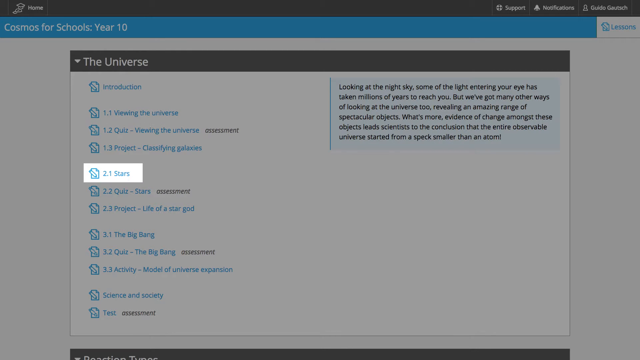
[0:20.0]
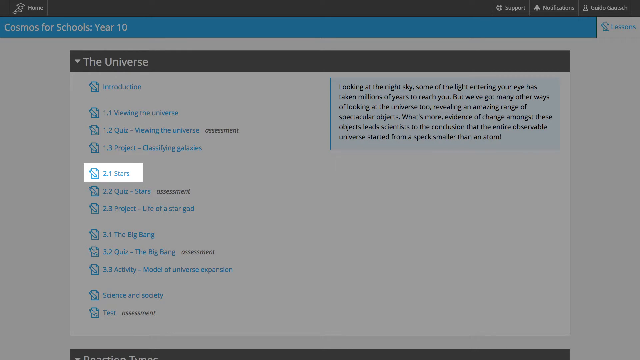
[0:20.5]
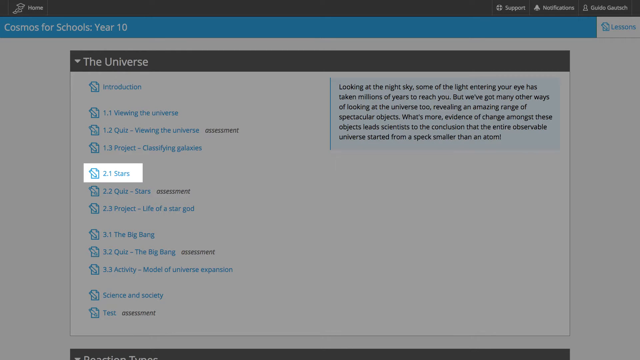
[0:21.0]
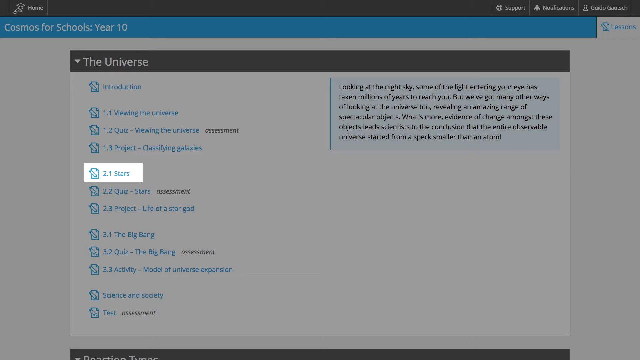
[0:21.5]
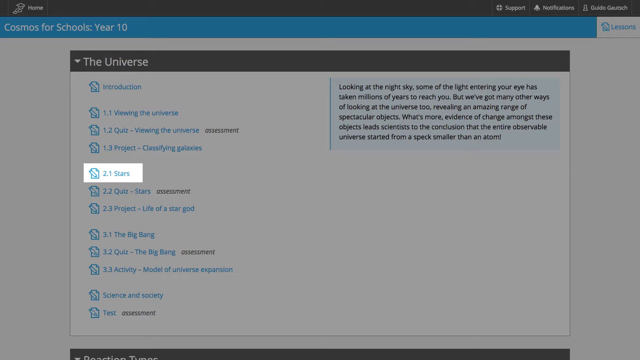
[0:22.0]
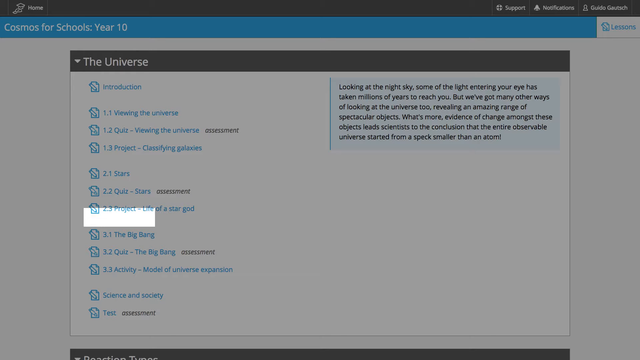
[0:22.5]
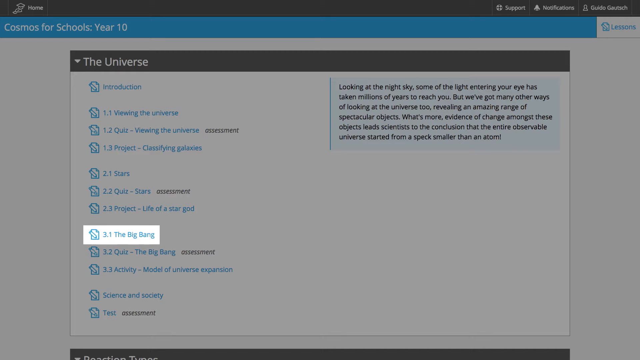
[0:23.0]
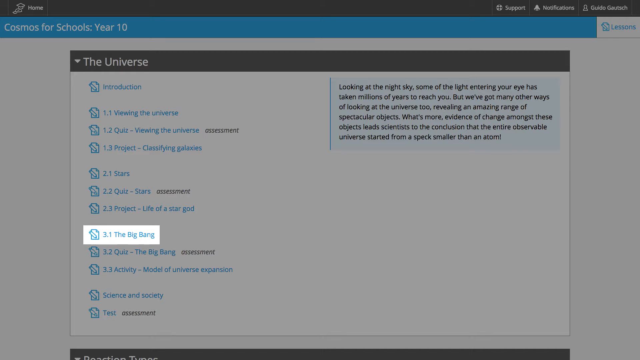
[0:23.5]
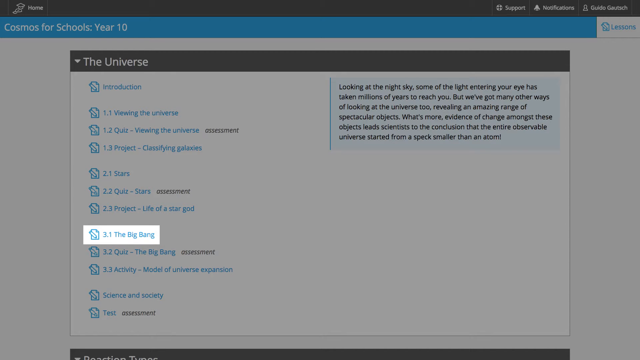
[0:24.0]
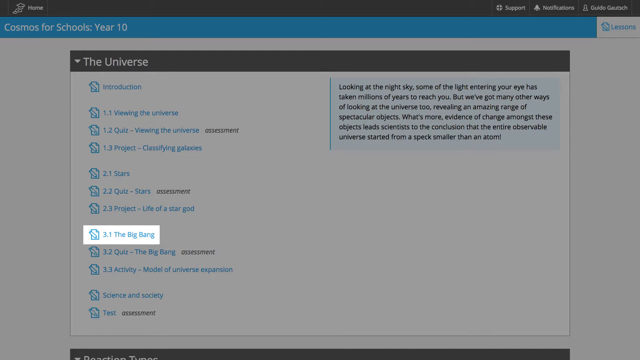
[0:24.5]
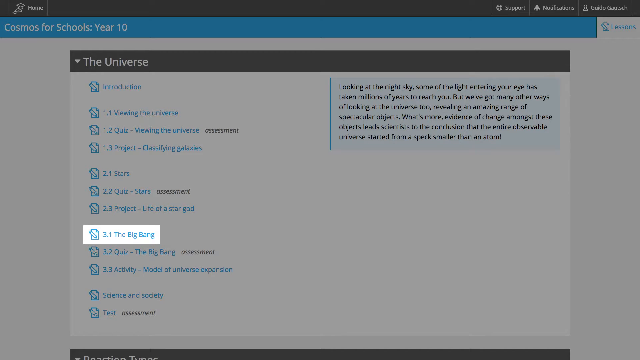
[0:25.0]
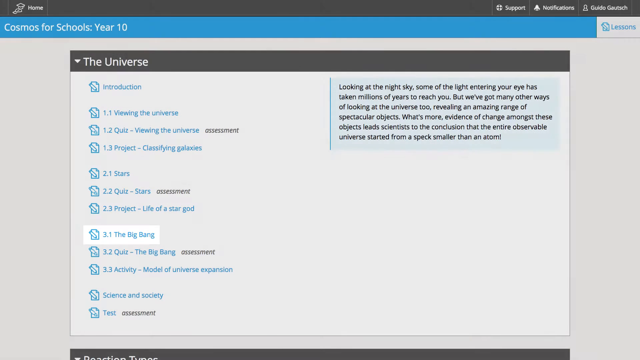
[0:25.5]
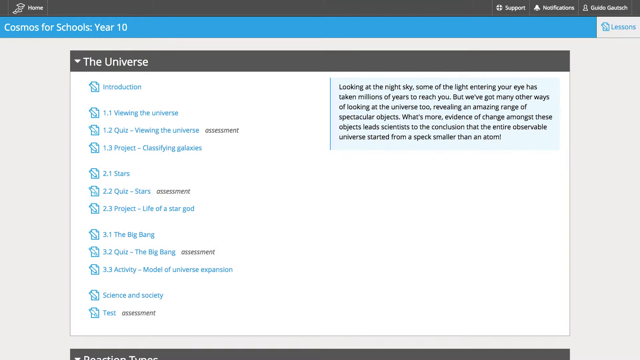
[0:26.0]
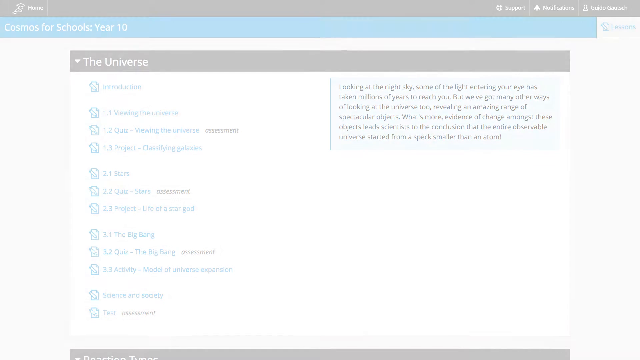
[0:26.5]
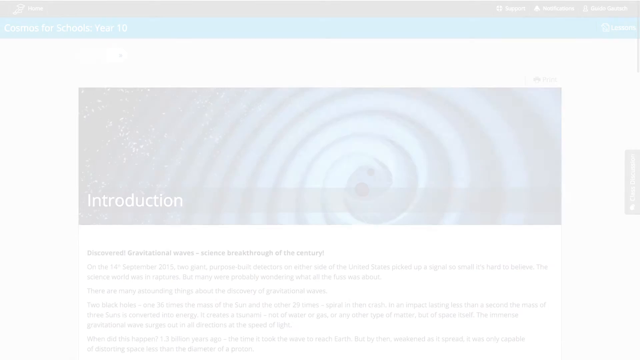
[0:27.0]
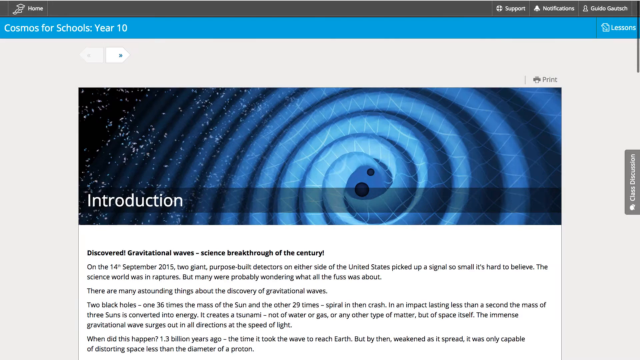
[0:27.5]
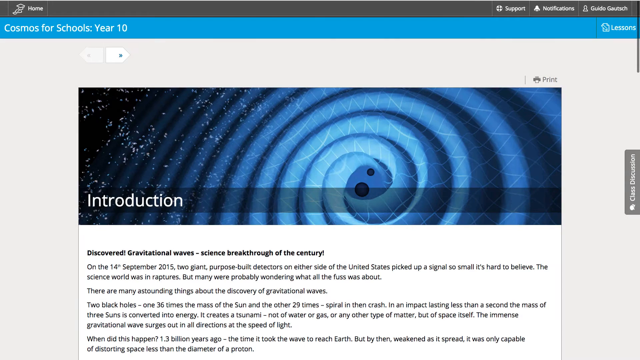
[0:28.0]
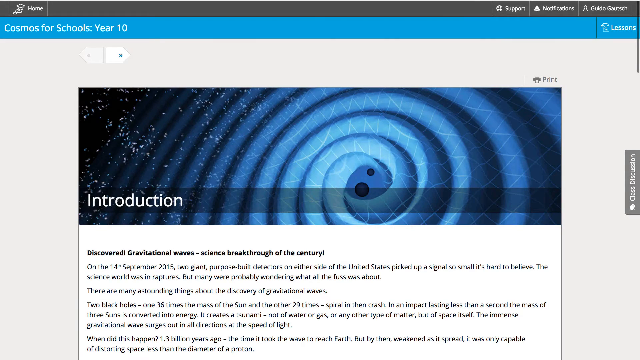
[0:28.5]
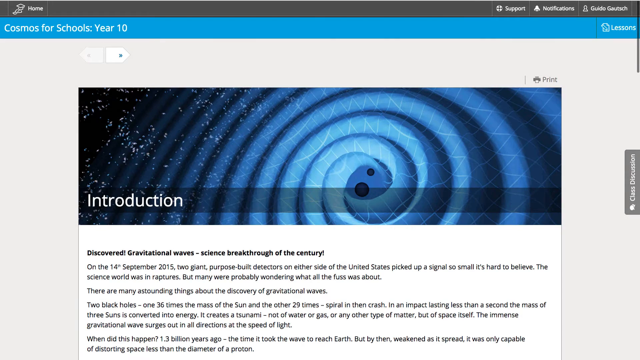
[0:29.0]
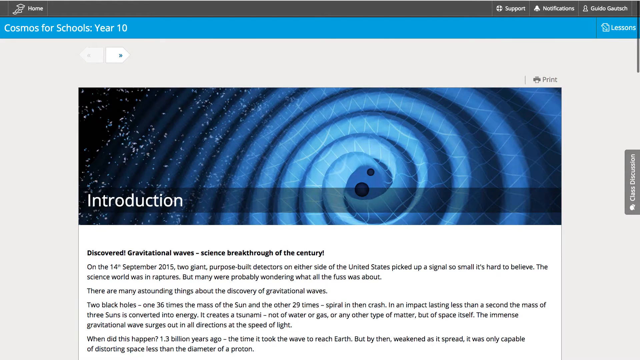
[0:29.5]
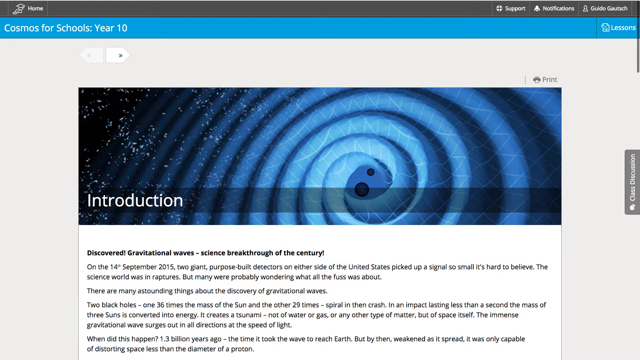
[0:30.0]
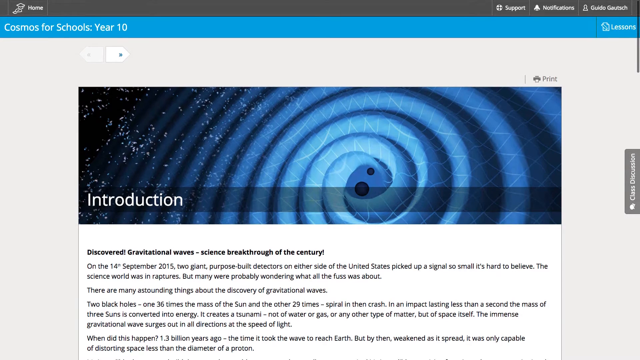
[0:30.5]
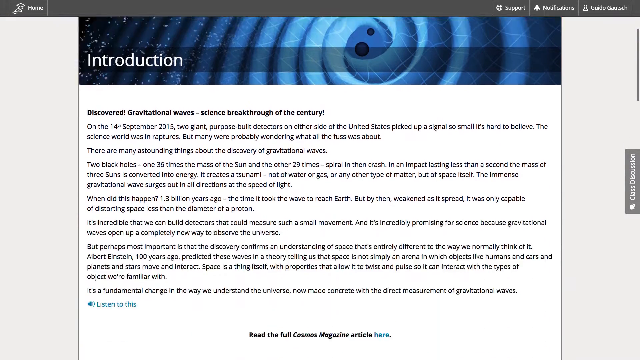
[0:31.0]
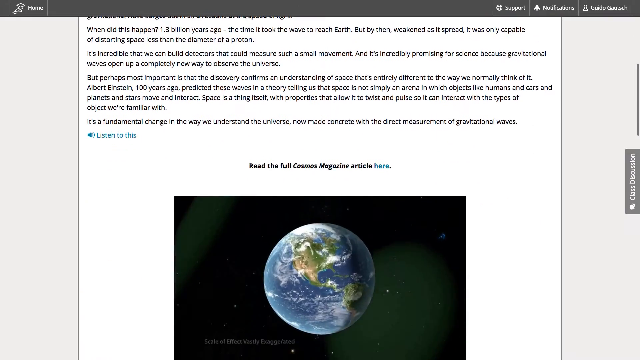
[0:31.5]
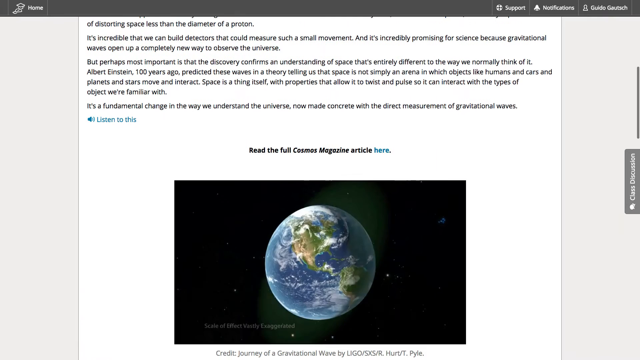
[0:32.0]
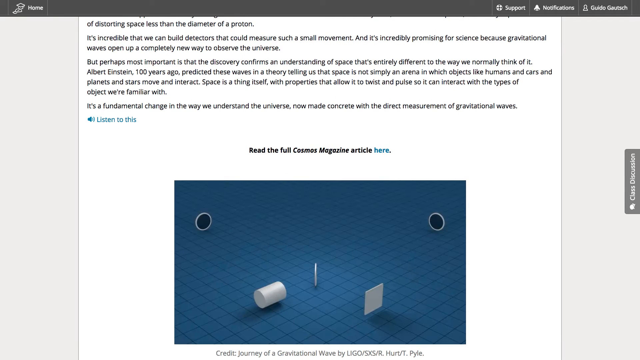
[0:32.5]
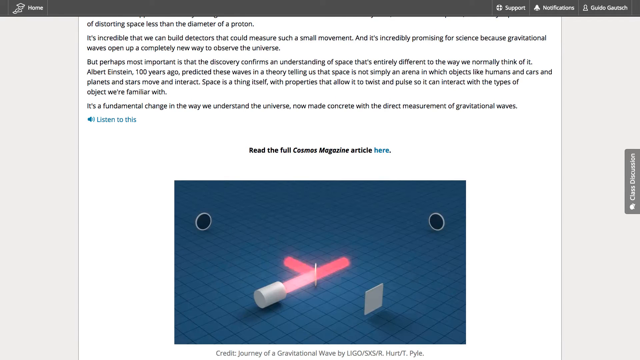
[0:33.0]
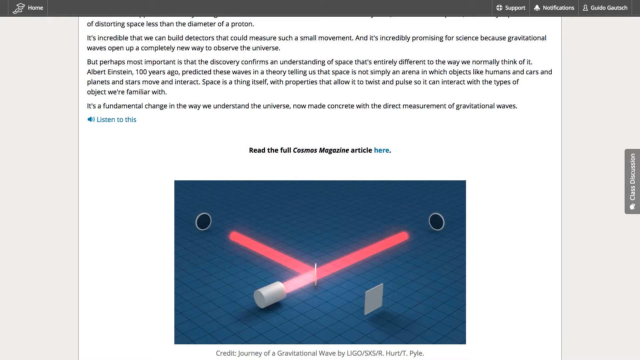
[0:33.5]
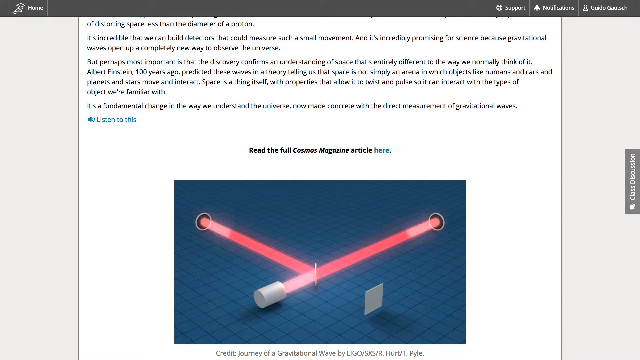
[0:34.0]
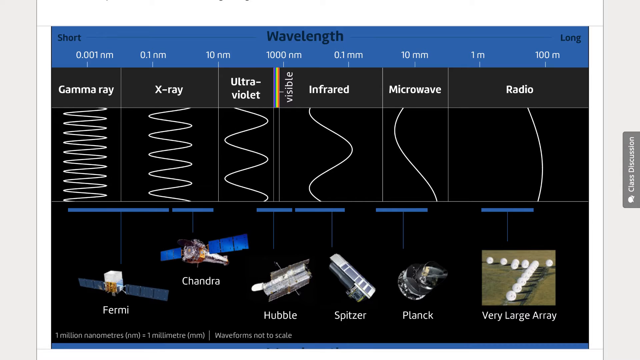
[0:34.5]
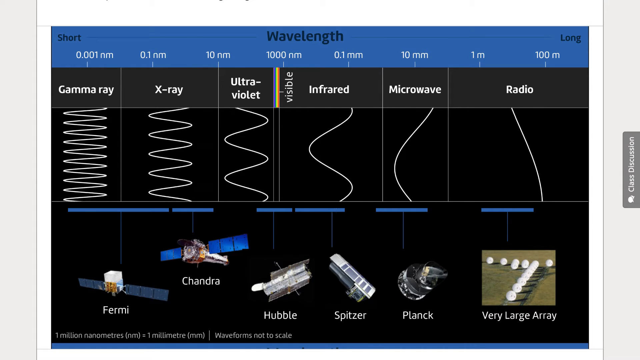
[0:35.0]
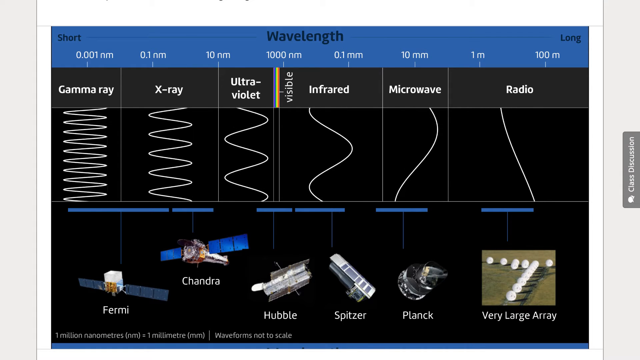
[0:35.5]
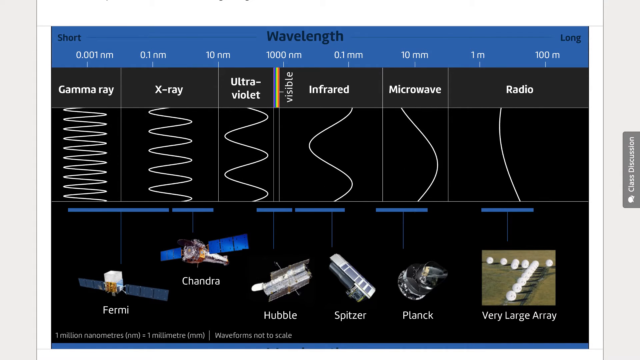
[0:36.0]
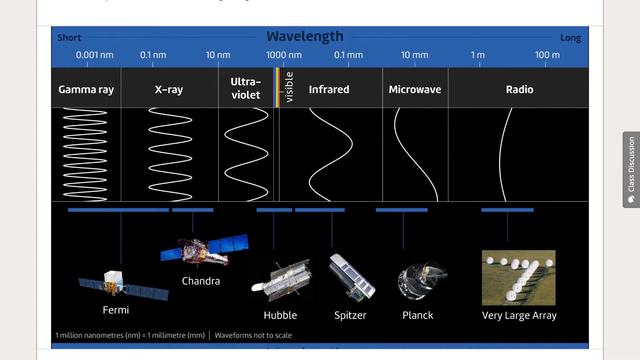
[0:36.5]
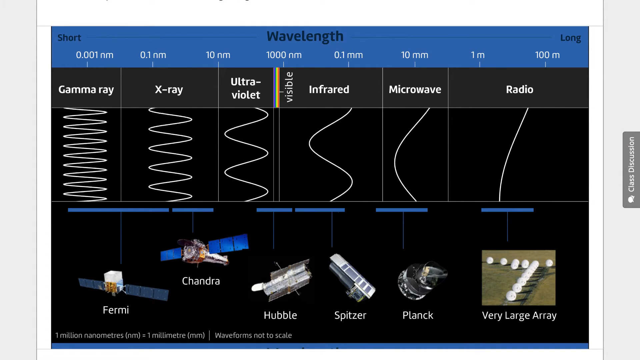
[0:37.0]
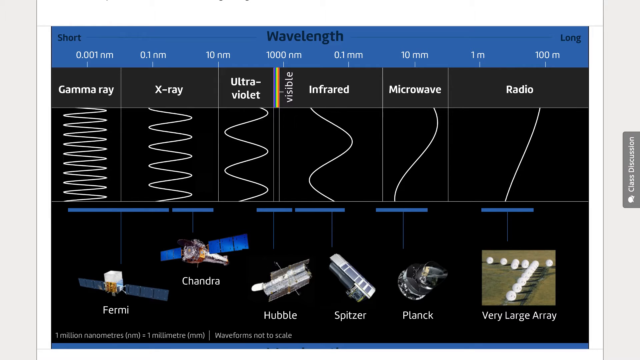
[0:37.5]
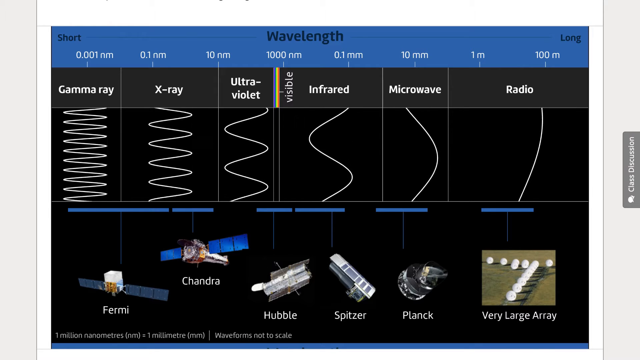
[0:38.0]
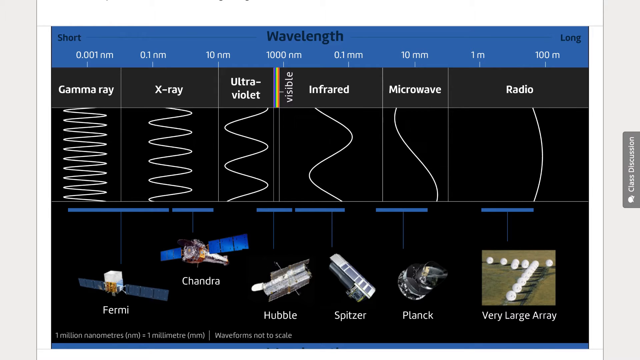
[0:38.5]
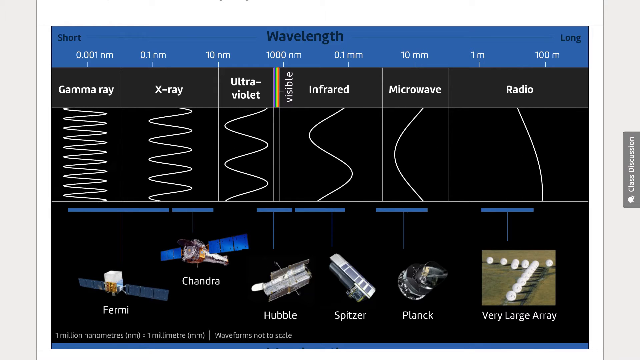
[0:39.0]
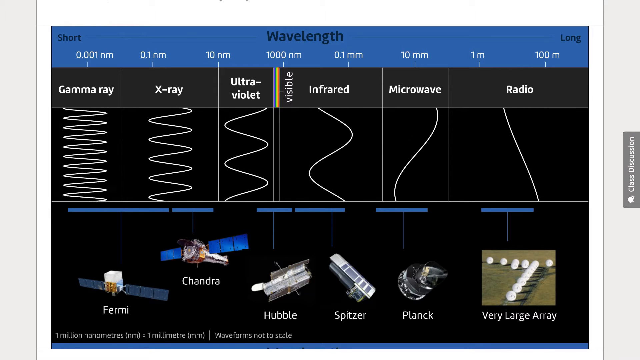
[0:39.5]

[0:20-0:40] The list continues, apparently covering stars and an assessment of stars. The specifics of the introduction follow, which appear to cover different waves: the gamma ray, the x-ray and the ultraviolet ray, with shorter wavelengths, and the longer wavelengths on the right side, the infrared, the microwave and the radio wave. Below that is a number of different satellites that revolve or have revolved around the earth collecting information. Before that, the introduction contains a lot of reading for the course, accompanied by pictures.